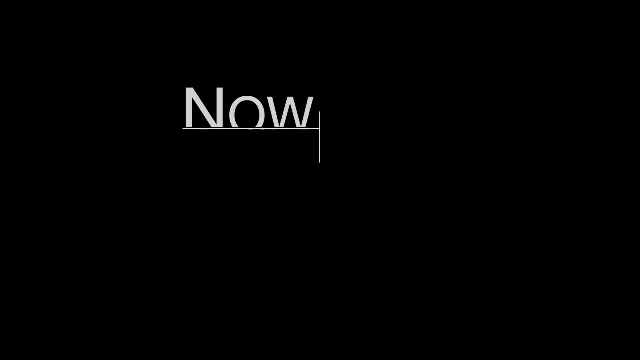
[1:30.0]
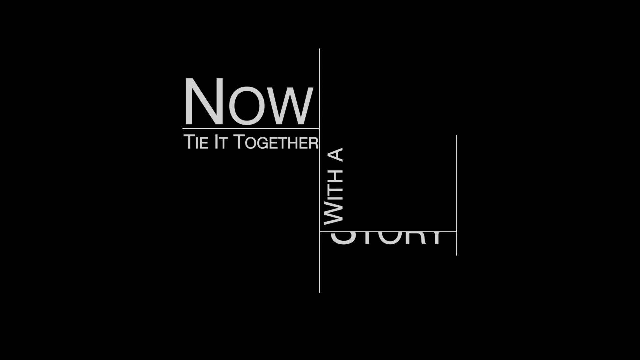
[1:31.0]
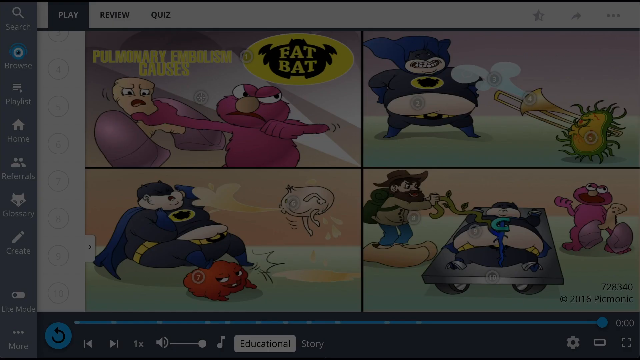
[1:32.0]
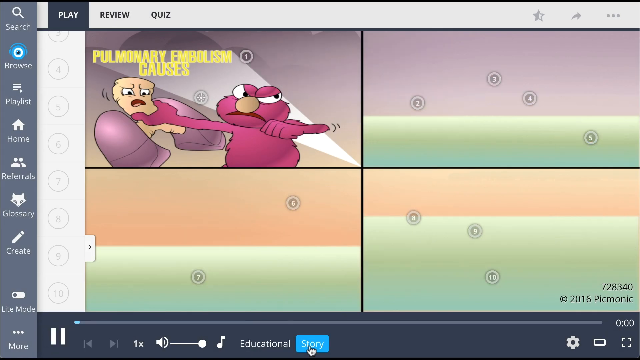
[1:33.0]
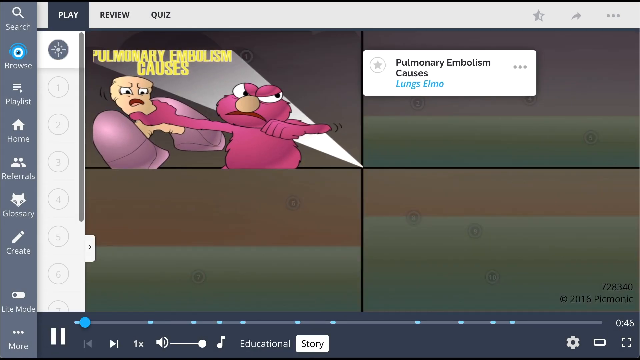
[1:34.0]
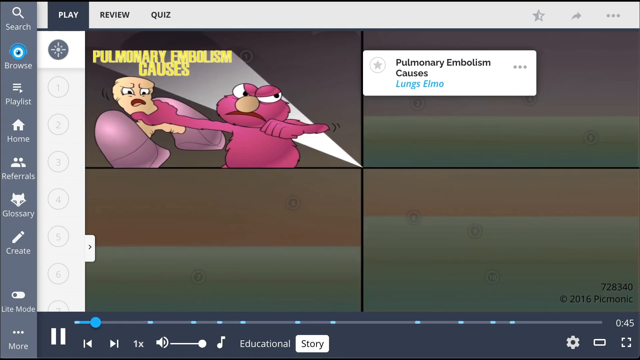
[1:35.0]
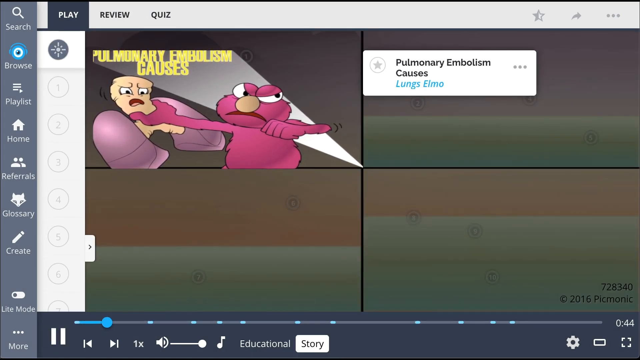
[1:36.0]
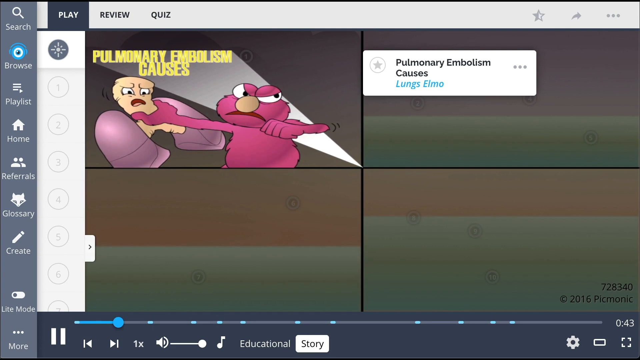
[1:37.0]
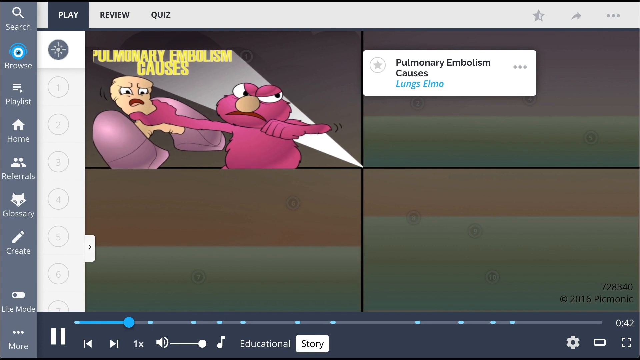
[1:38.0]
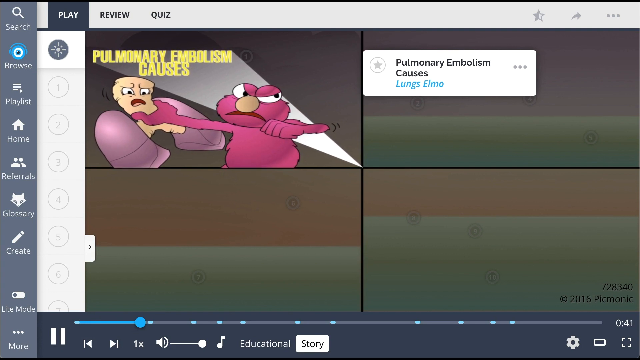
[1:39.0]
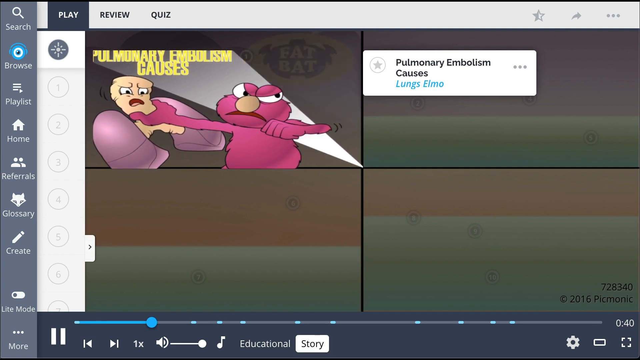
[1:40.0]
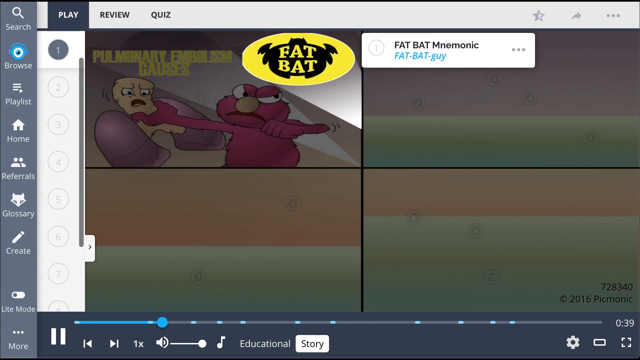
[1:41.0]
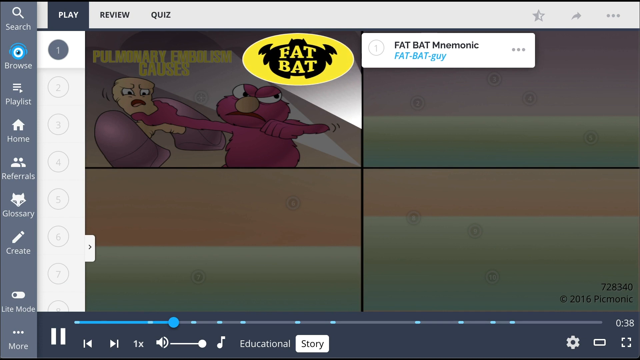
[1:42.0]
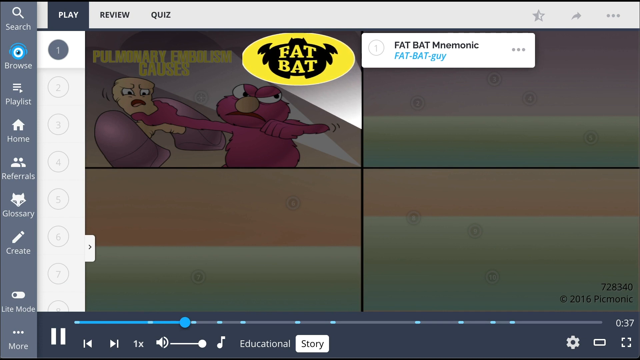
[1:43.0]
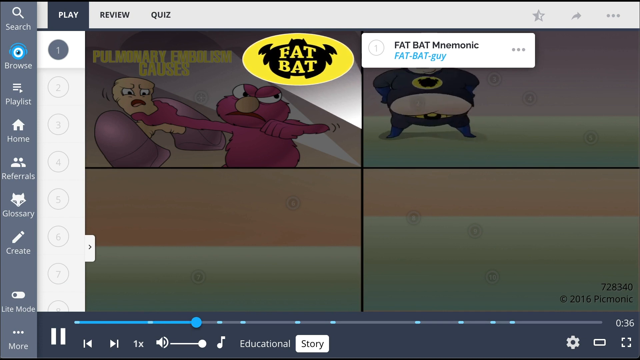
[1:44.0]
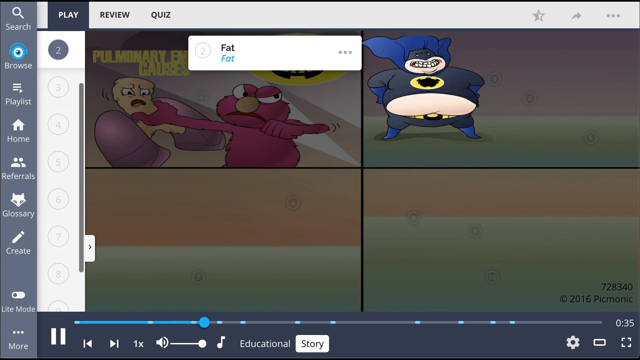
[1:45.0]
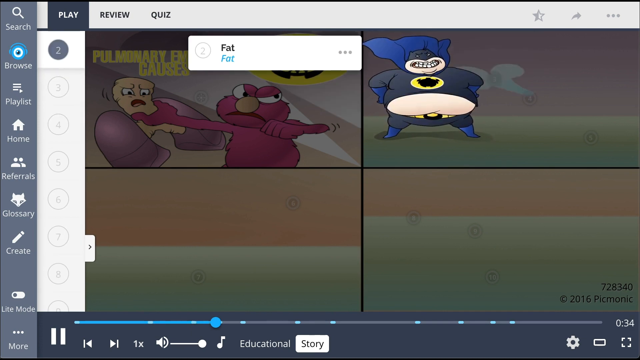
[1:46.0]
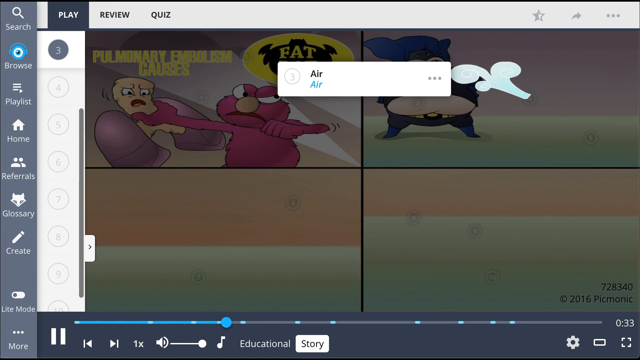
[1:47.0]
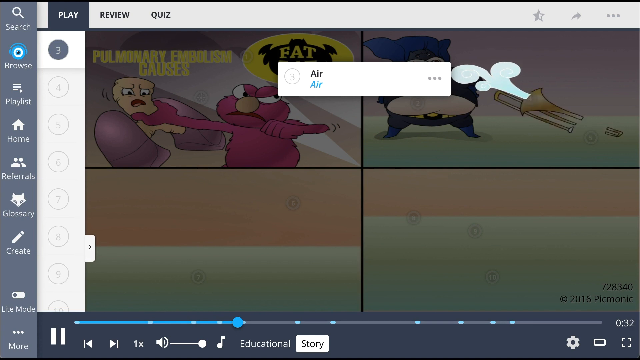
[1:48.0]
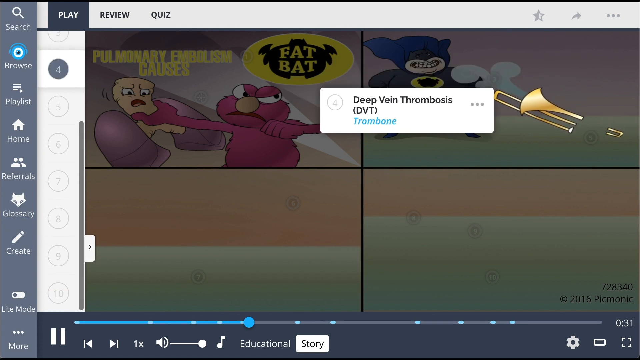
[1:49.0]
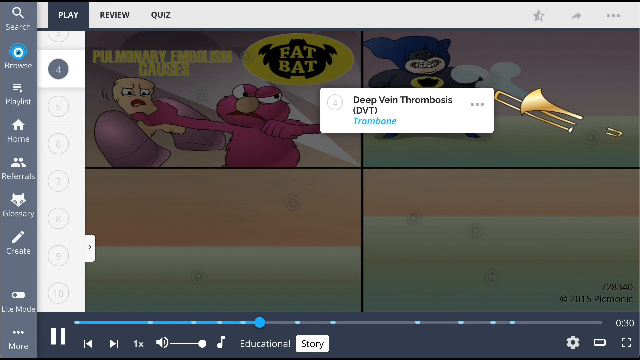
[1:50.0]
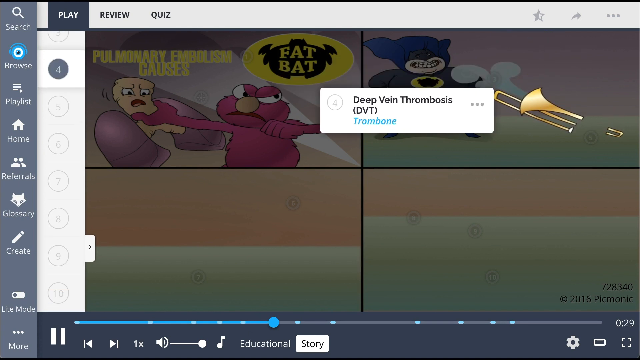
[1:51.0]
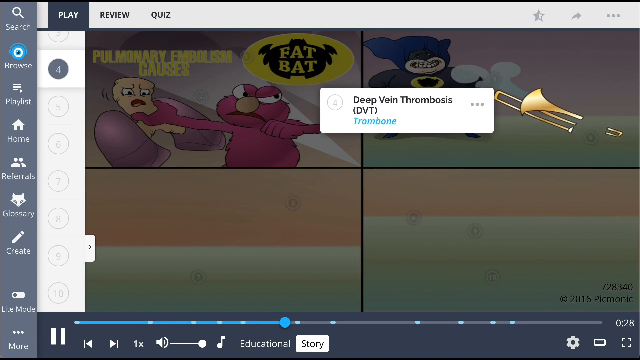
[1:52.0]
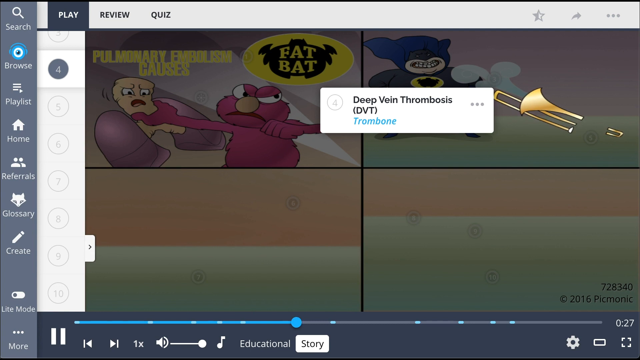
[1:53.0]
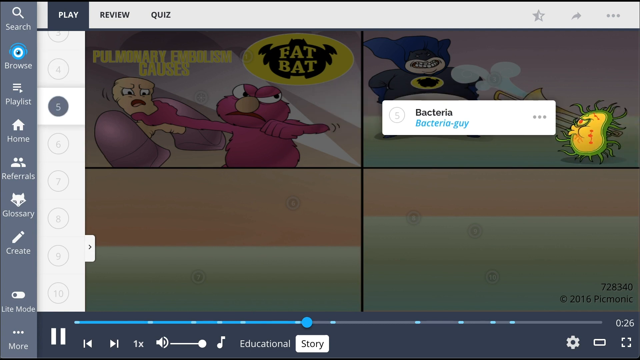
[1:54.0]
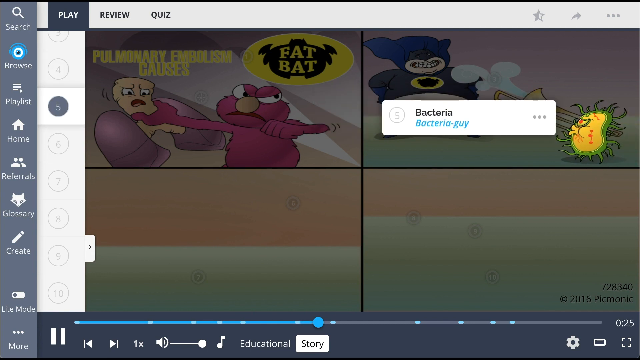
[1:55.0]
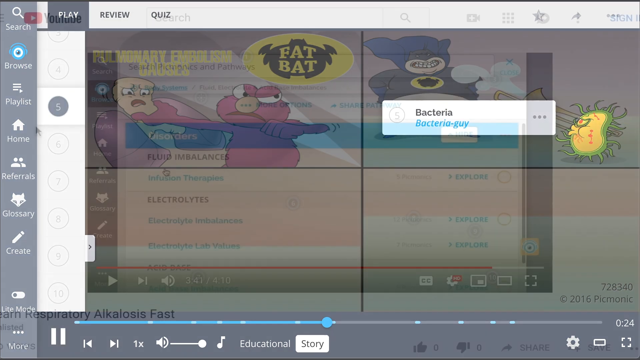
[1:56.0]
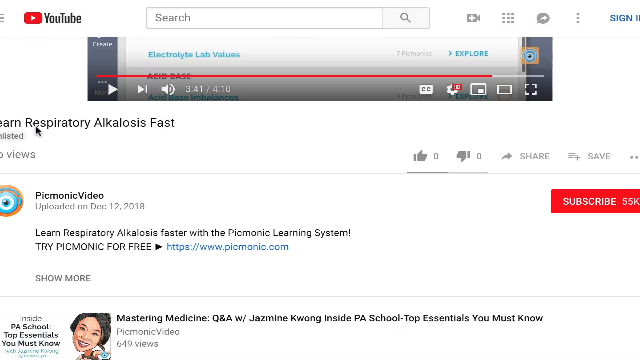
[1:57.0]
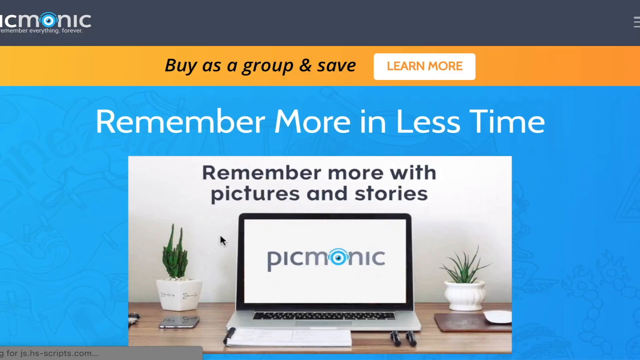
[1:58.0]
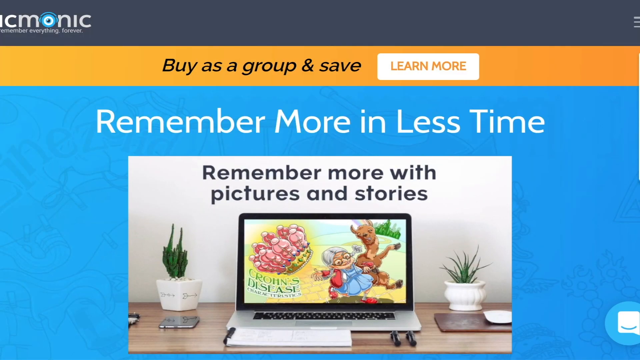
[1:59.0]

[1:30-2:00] White writing appears on a black background: "NOW," then in smaller letters "tie it together," in medium letters "with a," and in big letters "STORY." The earlier sequence repeats, but now the Elmo fighting the lungs has yellow text added reading "pulmonary embolism causes." Fat Batman appears and blows out wind, then the instrument appears with a bacteria blowing on it. A different screen share then goes to YouTube: the website is mostly white with black text and a video at the top, titled "Learn respiratory alkalitis fast," by the Picmonic channel. It then goes to a page where one can pay for a course to learn about this topic.